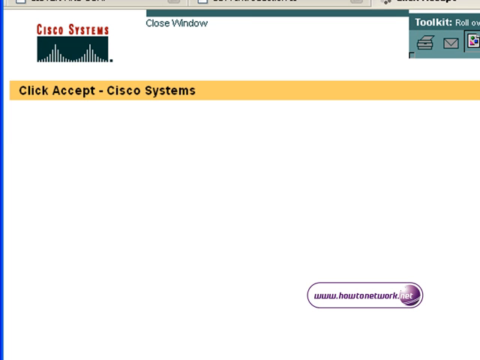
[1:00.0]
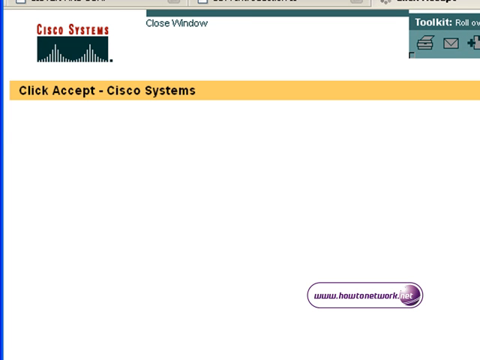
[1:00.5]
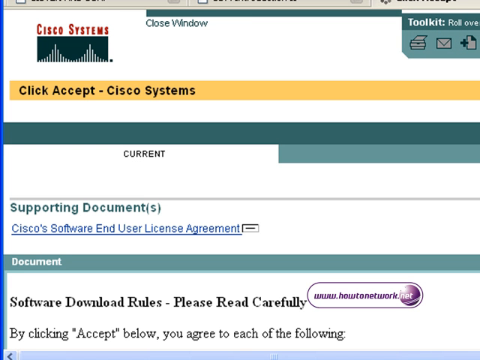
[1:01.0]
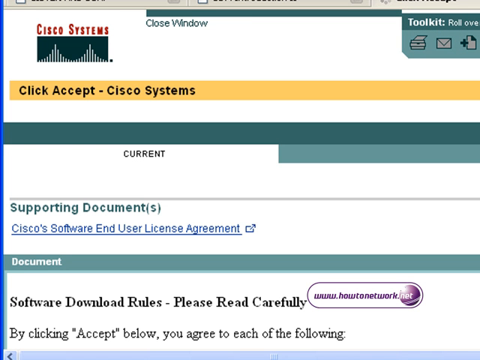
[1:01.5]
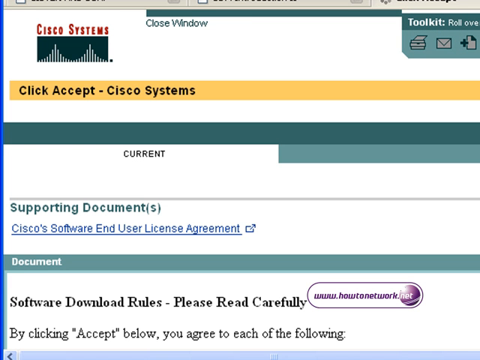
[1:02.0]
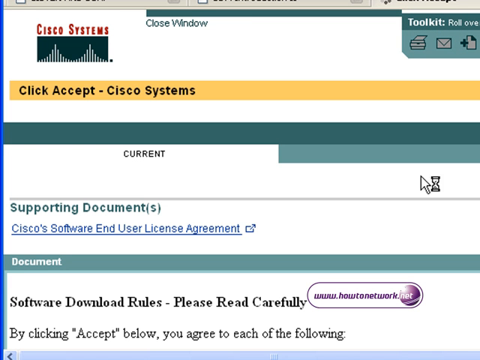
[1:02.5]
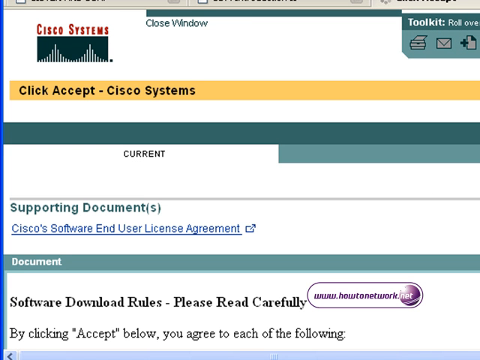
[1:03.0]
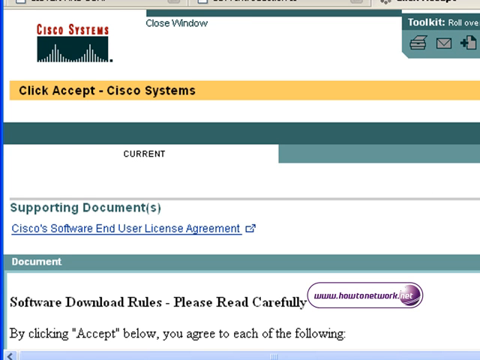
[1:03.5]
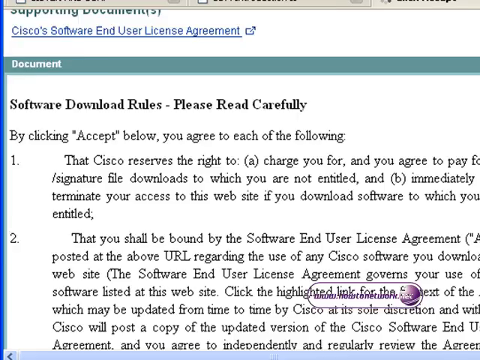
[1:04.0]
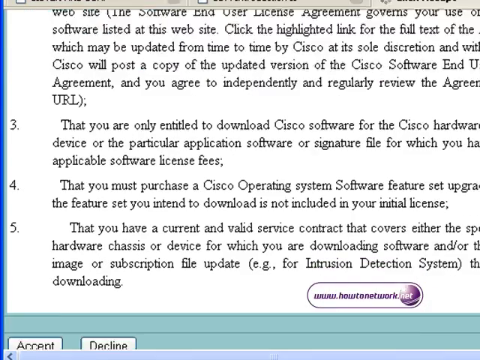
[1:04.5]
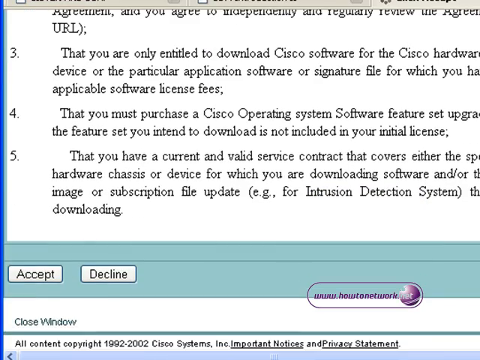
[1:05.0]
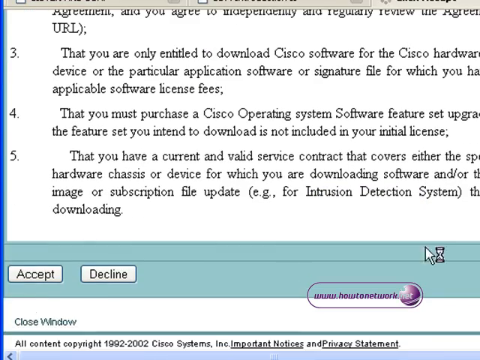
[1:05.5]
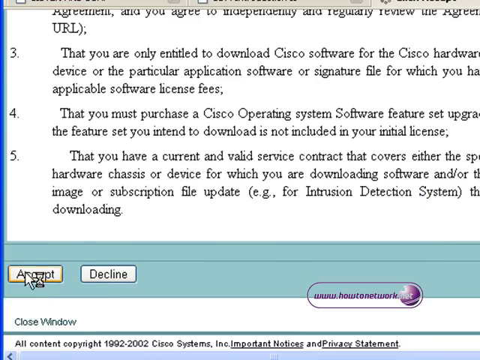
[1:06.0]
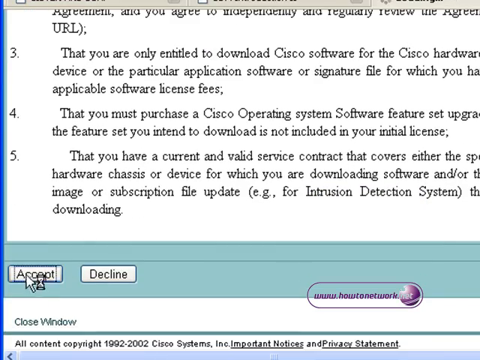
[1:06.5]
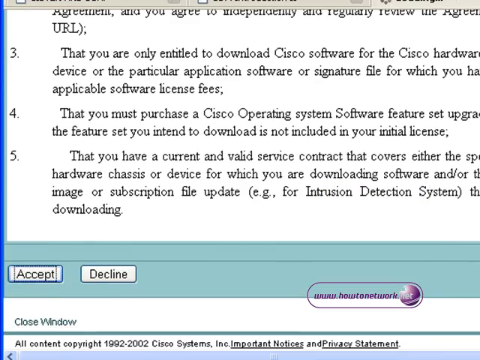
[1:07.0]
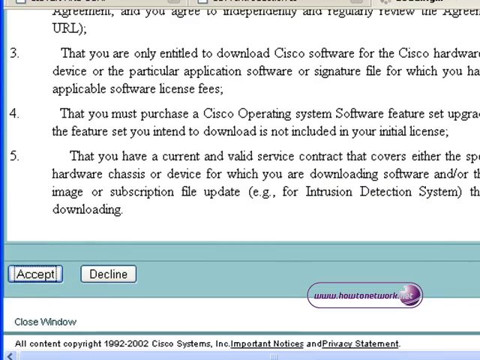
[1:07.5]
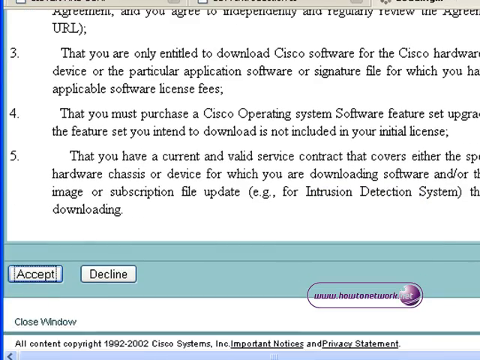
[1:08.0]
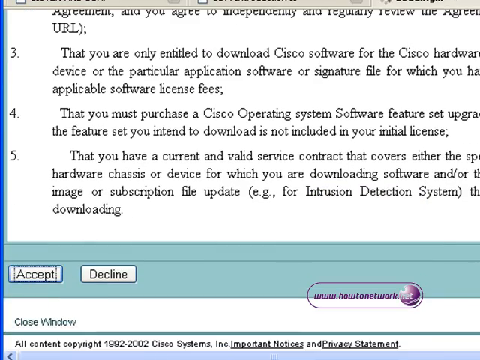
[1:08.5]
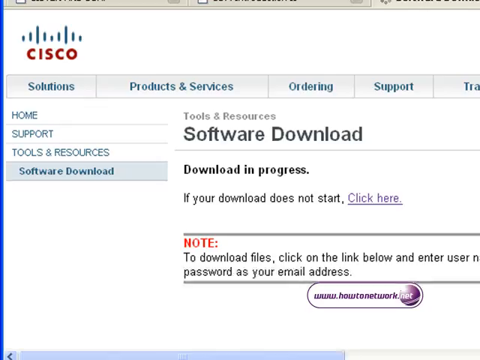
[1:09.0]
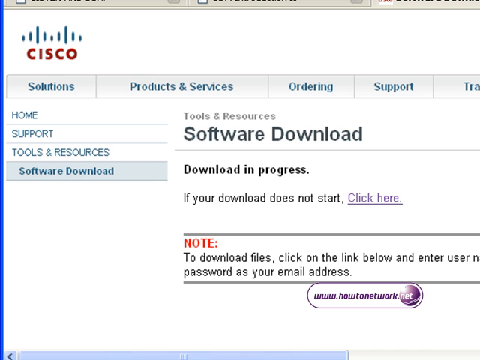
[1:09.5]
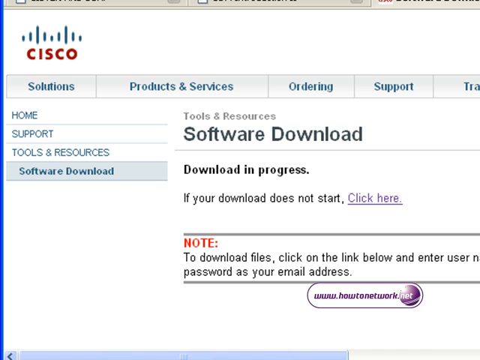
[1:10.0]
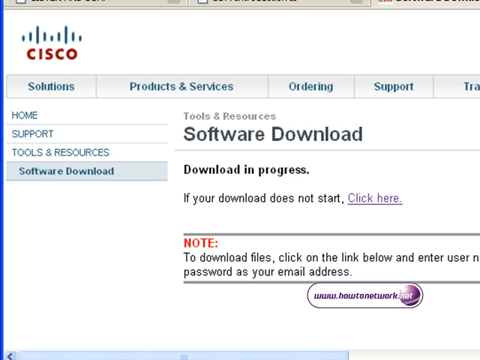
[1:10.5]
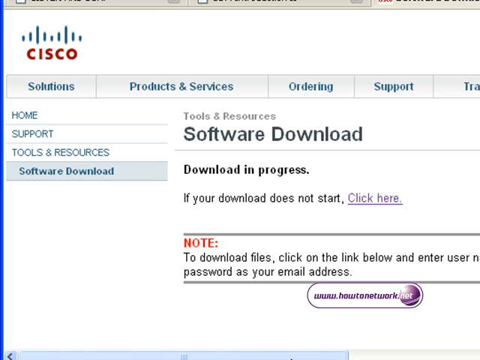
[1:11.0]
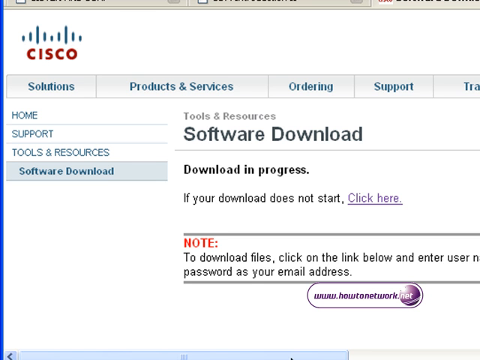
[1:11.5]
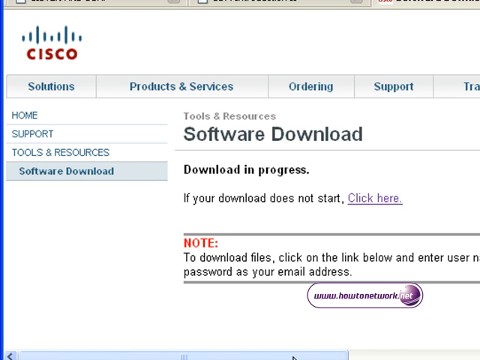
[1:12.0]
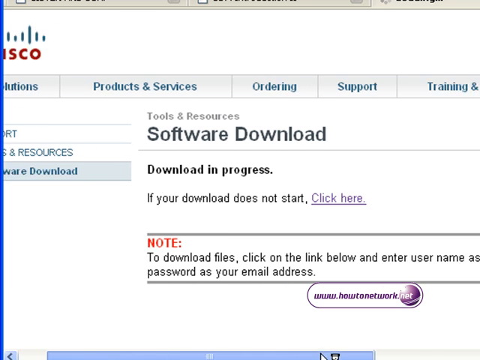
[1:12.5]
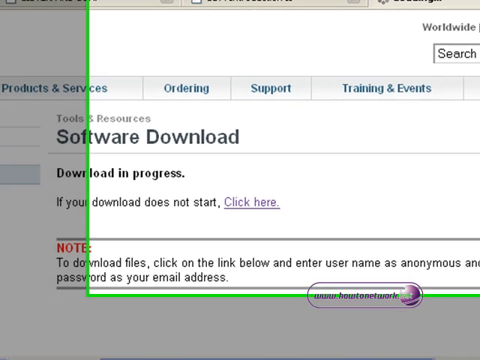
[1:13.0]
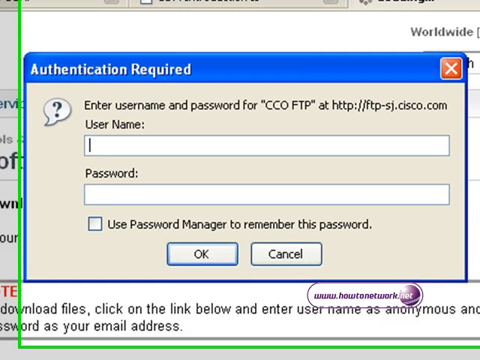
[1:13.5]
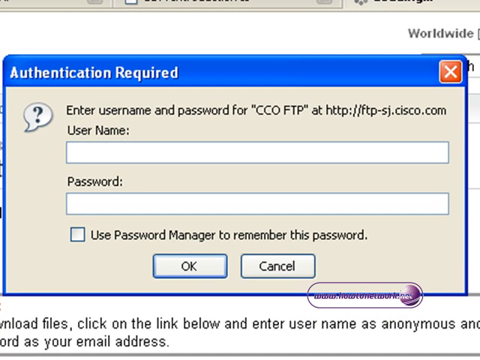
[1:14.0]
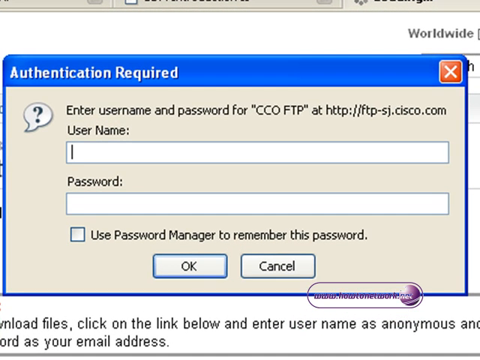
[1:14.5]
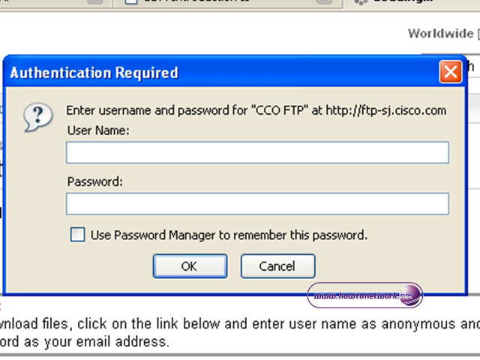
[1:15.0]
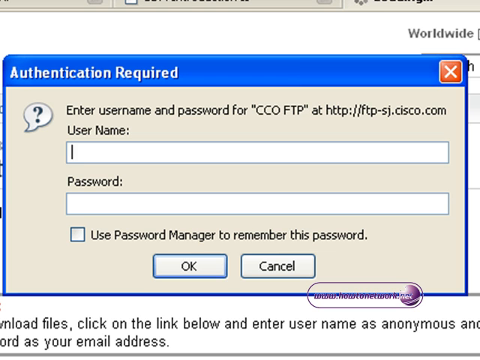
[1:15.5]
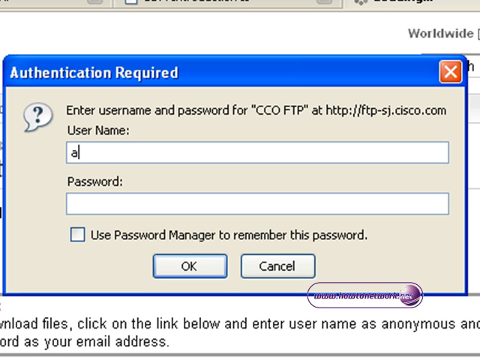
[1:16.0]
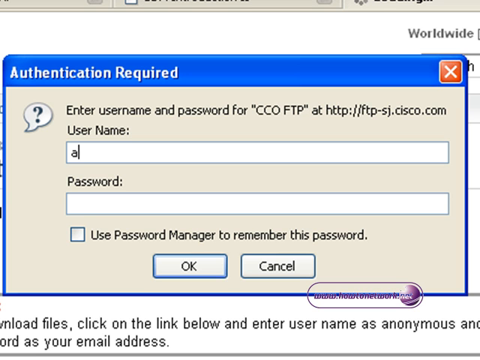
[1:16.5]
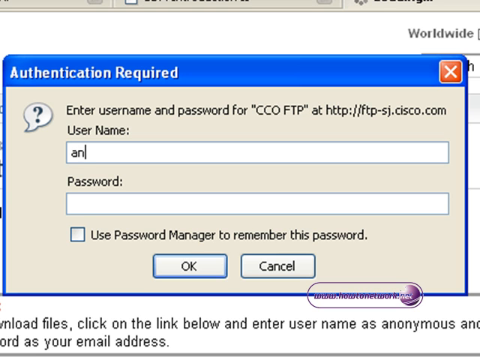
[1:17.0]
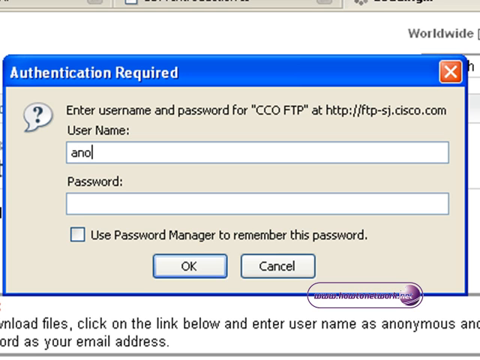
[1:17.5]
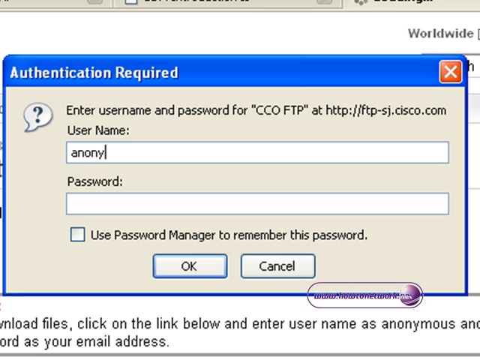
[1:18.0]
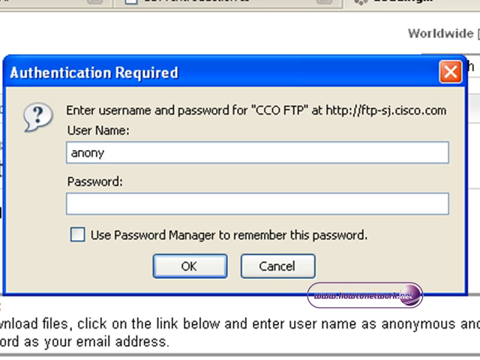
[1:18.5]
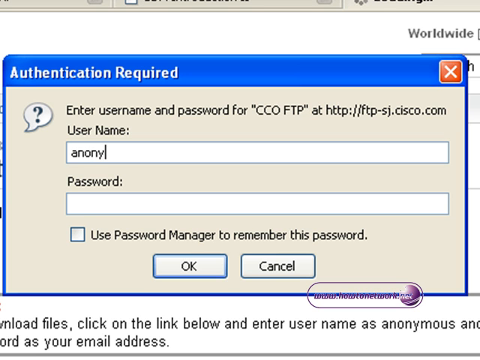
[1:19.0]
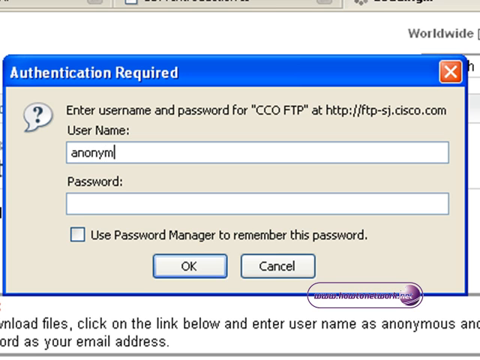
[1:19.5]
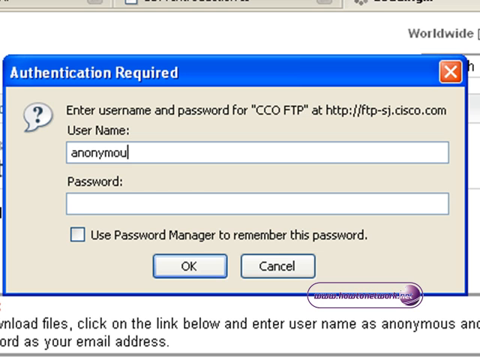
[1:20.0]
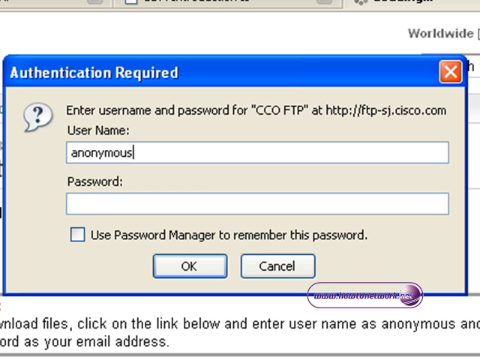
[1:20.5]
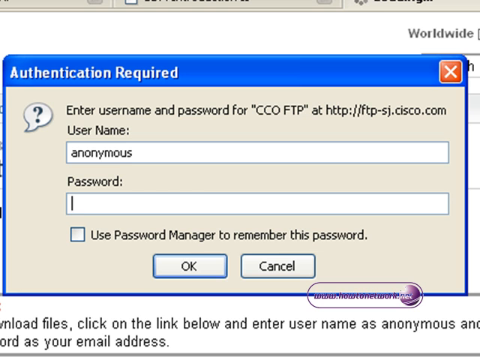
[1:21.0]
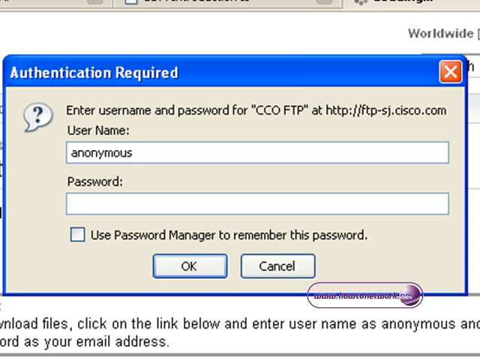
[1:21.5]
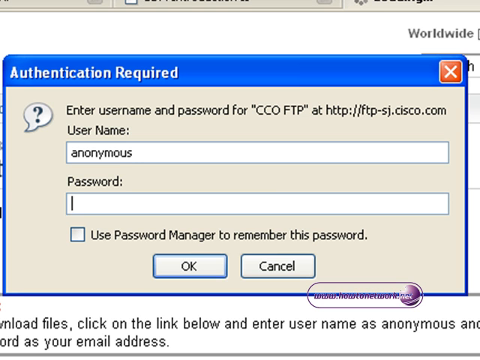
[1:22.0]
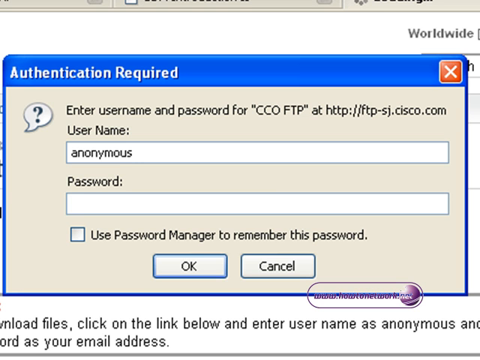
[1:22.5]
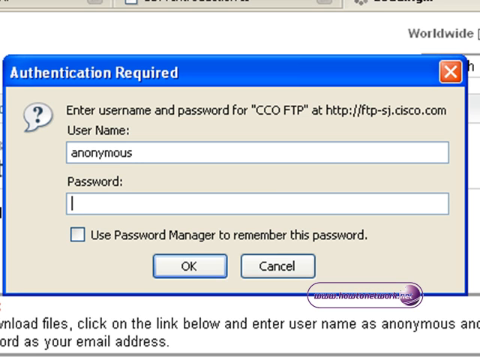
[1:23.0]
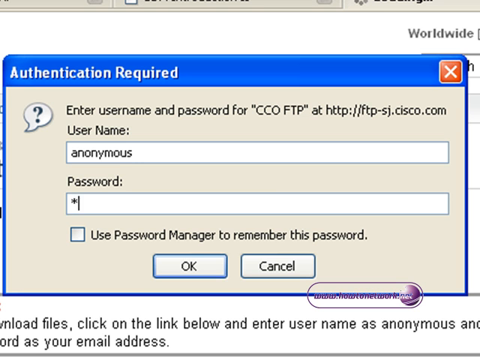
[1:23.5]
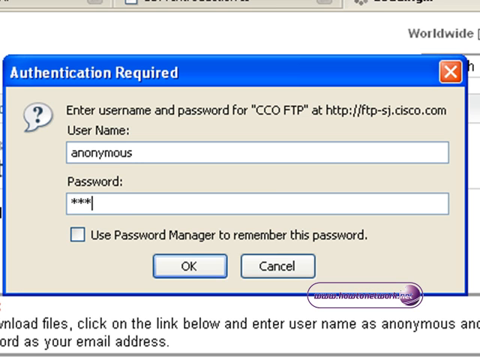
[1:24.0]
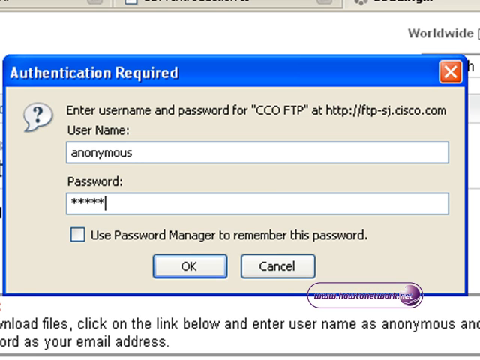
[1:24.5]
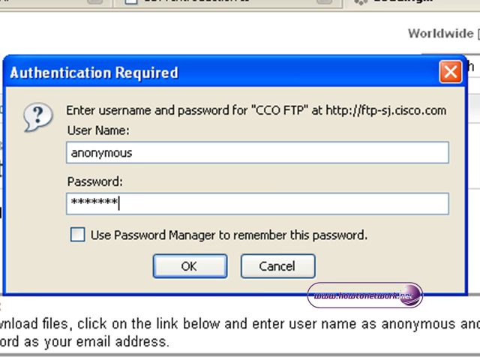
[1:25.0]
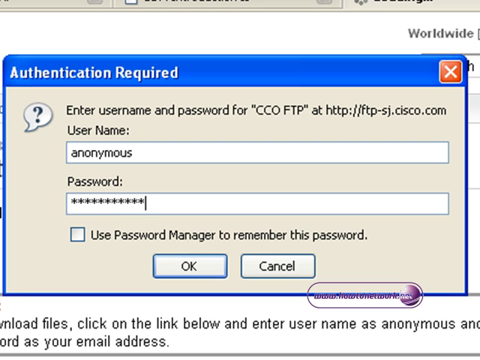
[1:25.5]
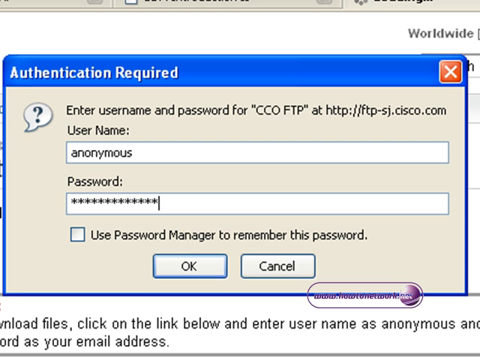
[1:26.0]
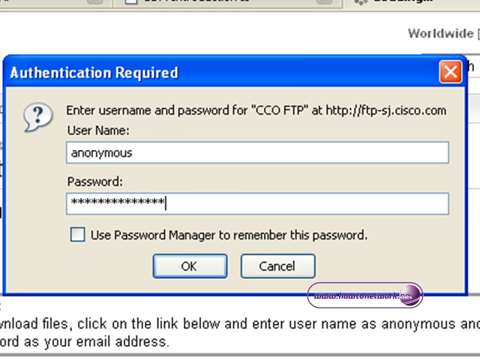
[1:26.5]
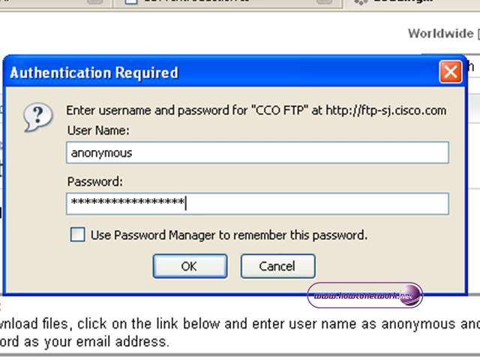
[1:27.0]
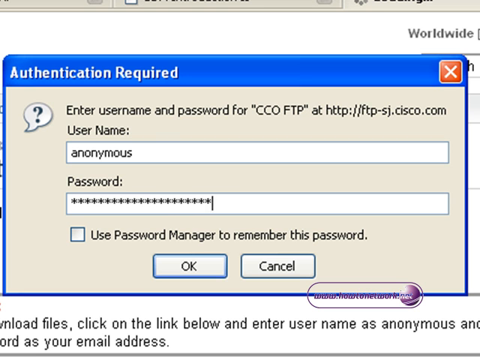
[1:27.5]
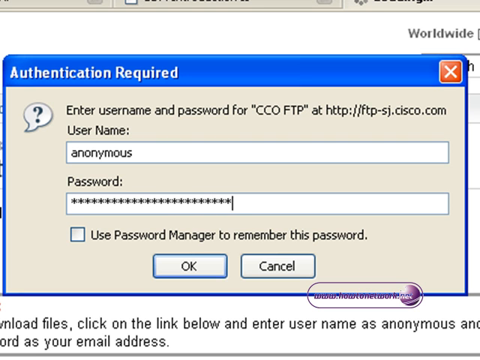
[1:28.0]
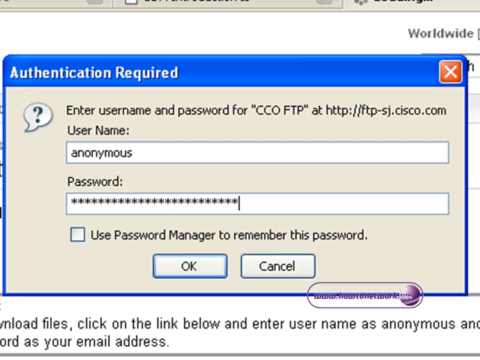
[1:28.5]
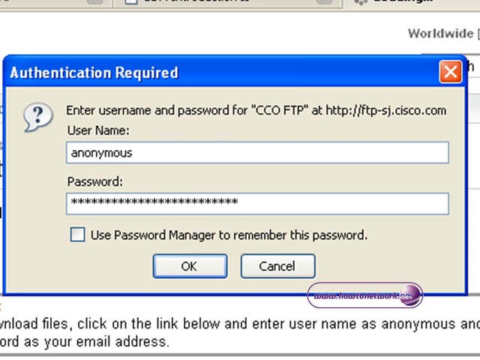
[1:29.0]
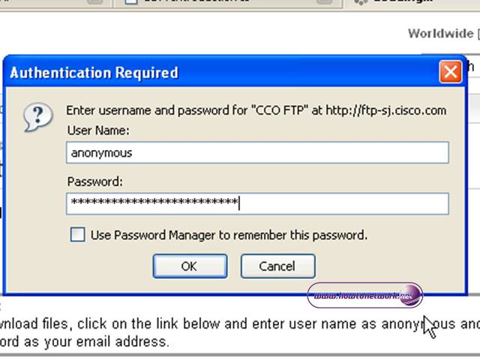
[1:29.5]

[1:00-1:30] The page title appears in a yellow box in black lettering: "ClickAccept-CiscoSystems". The view scrolls down quickly through the software download rules, which say "please read carefully", to an accept button on the left and a decline button on the right. When the white mouse is over the accept button, a yellow border appears, and the mouse clicks it. Another page says "download in progress. If your download does not start, click here", with "click here" as a purple hyperlink. A new box pops up with a dark blue border at the top and a blue rectangle that says "authentication required. Enter username and password". It has a username box above a password box, a checkbox beneath that says "use password manager to remember this password", and below that an "okay" box on the left and a "cancel" box on the right. The username box is clicked and "anonymous" is typed; then the password box is clicked and a password is typed, shown as asterisks.